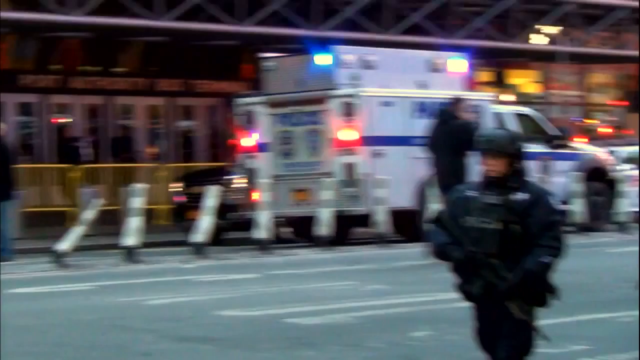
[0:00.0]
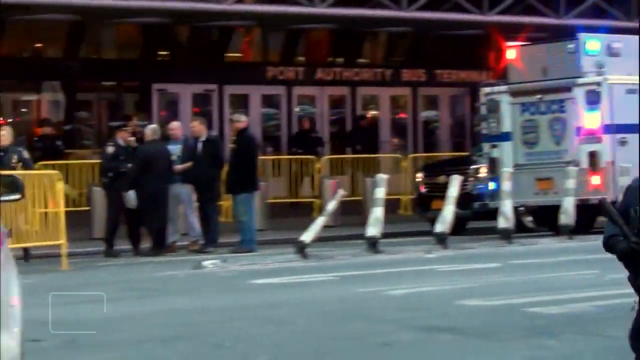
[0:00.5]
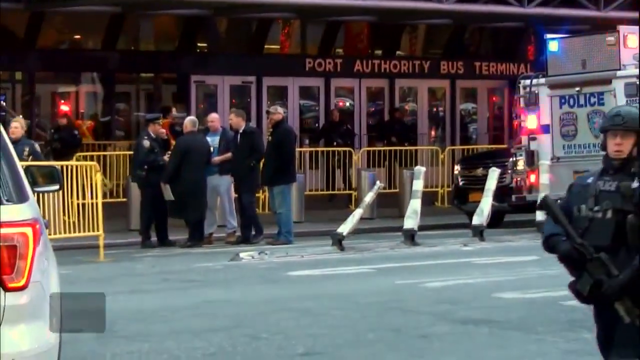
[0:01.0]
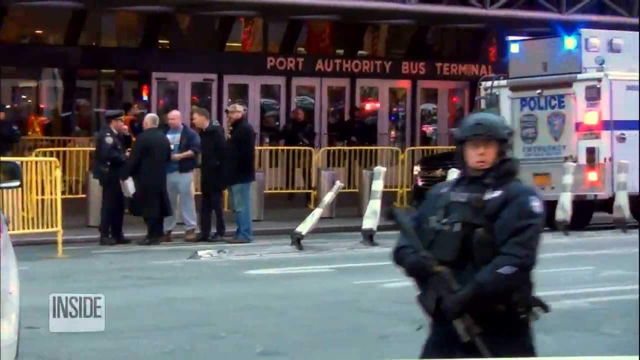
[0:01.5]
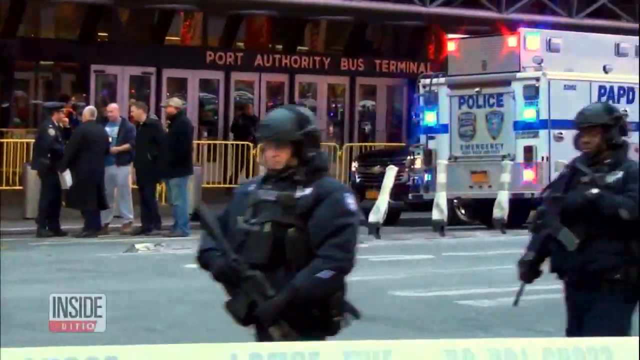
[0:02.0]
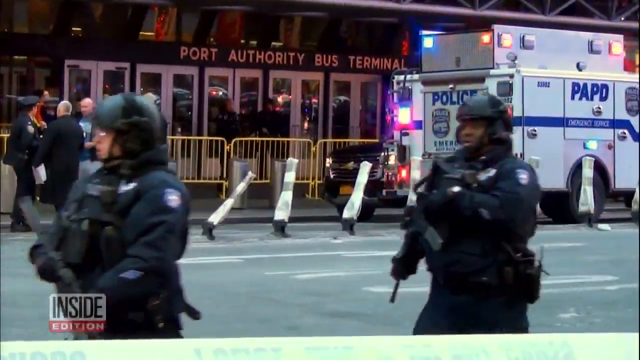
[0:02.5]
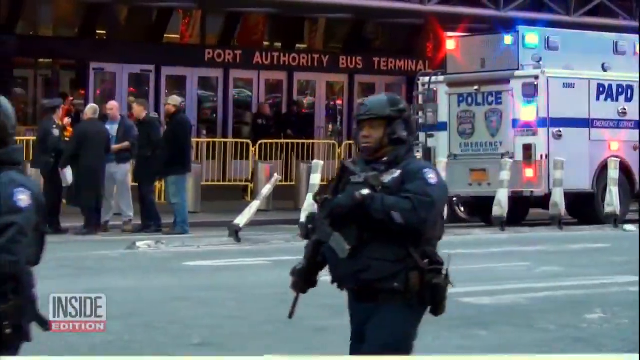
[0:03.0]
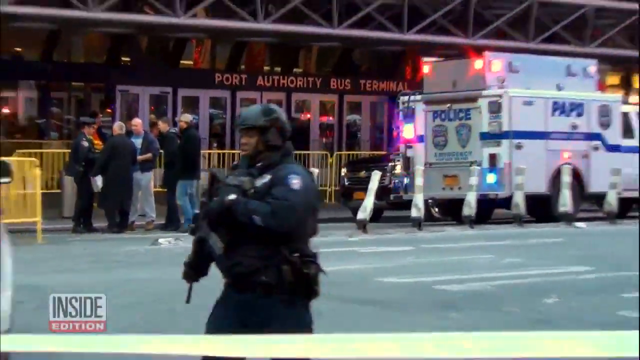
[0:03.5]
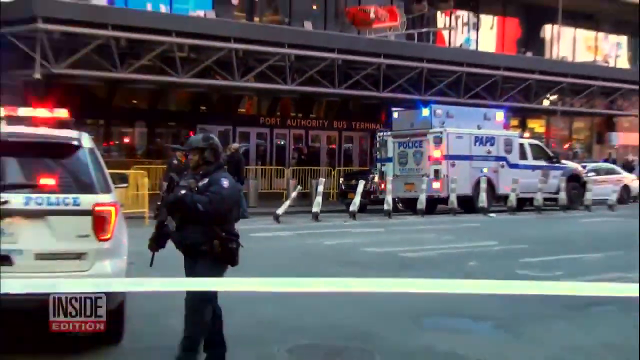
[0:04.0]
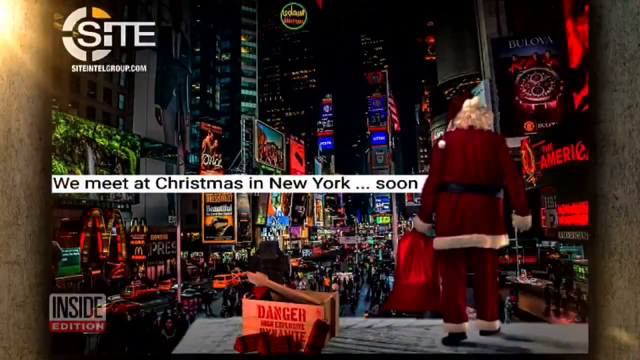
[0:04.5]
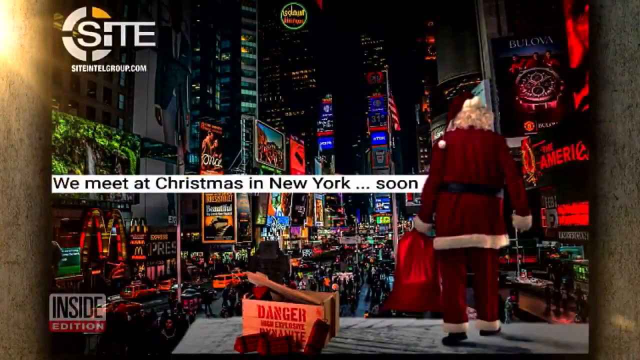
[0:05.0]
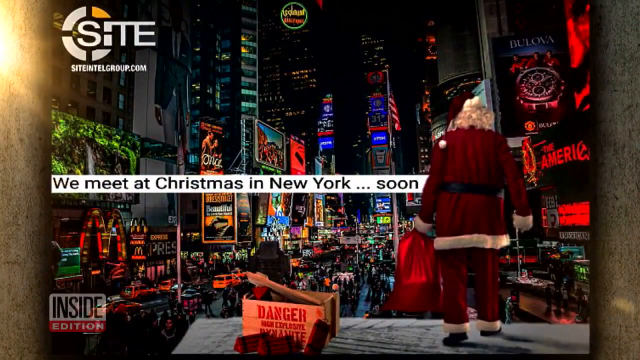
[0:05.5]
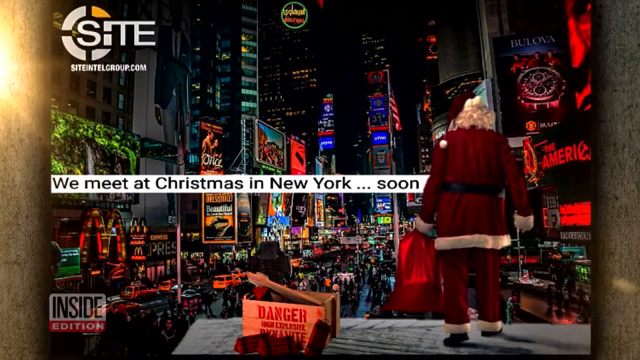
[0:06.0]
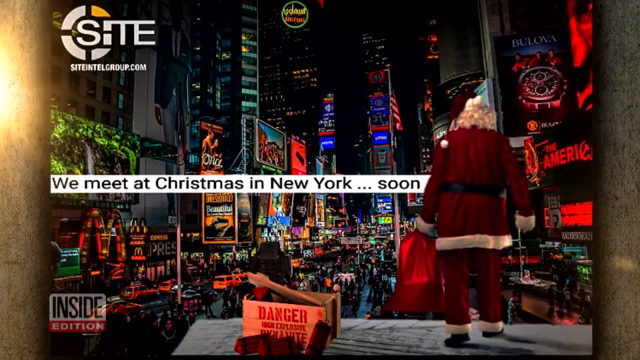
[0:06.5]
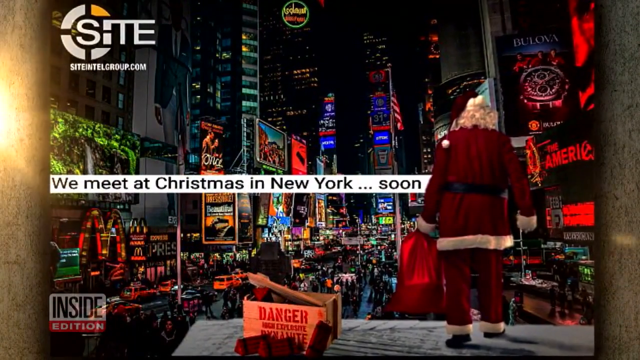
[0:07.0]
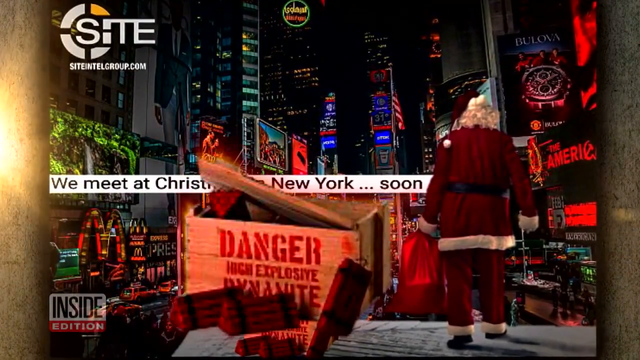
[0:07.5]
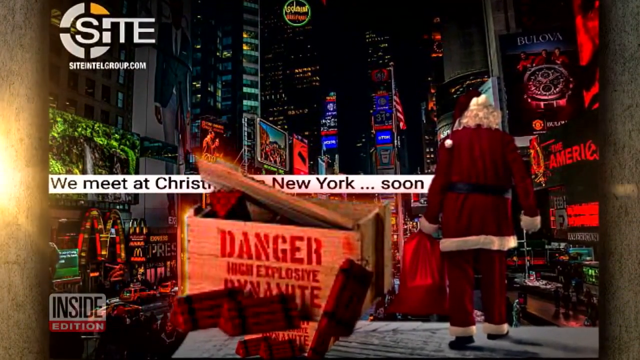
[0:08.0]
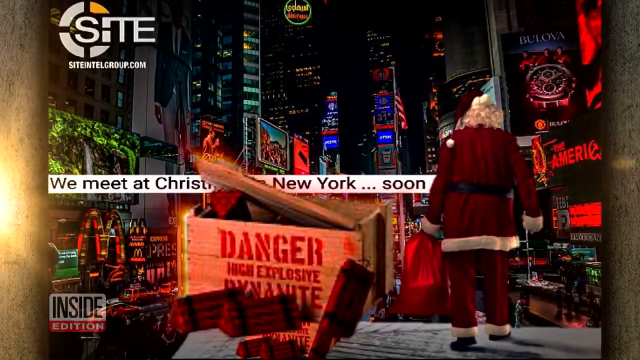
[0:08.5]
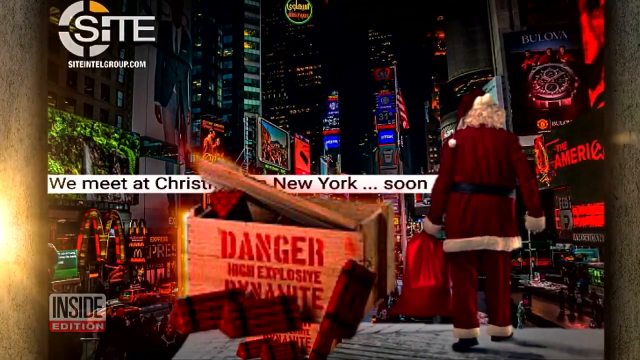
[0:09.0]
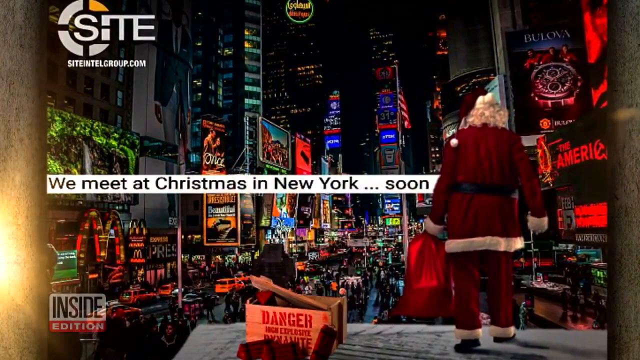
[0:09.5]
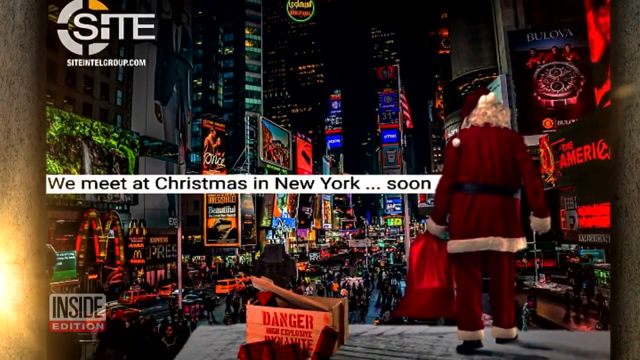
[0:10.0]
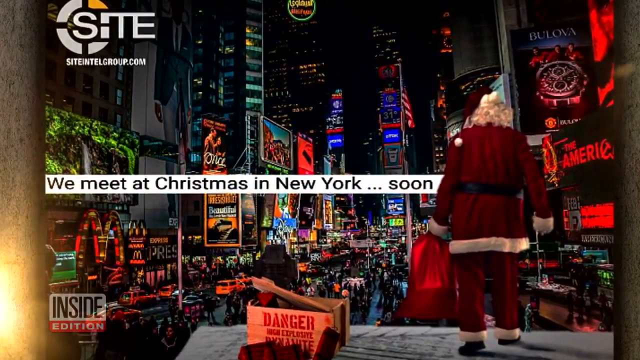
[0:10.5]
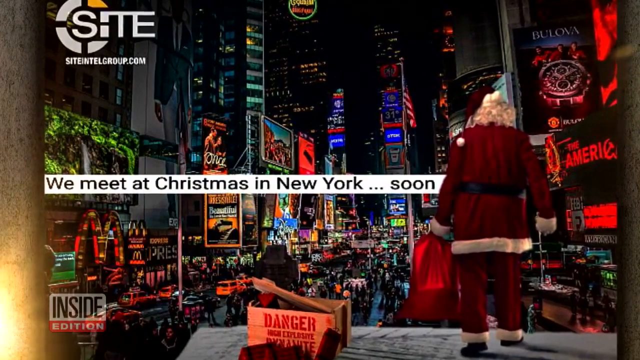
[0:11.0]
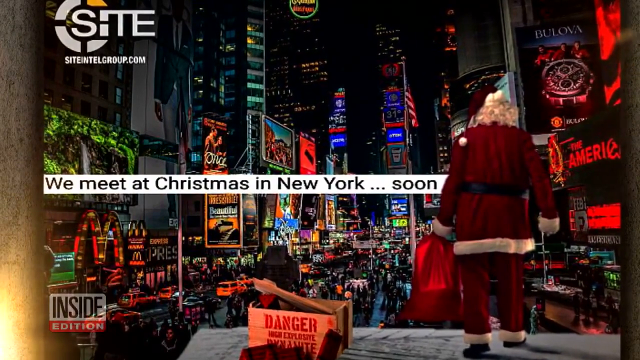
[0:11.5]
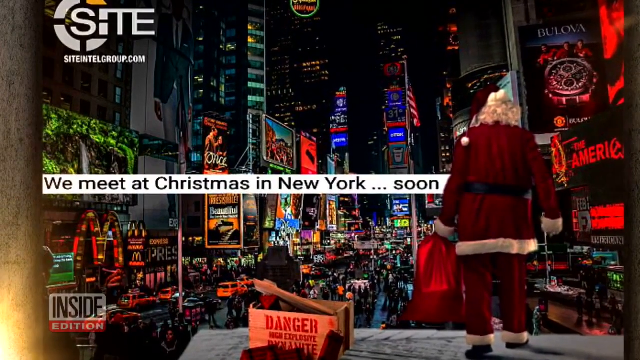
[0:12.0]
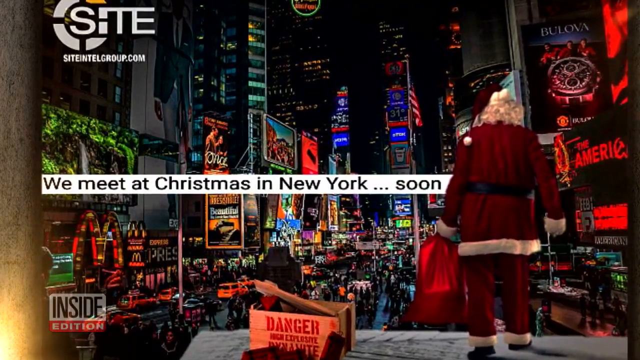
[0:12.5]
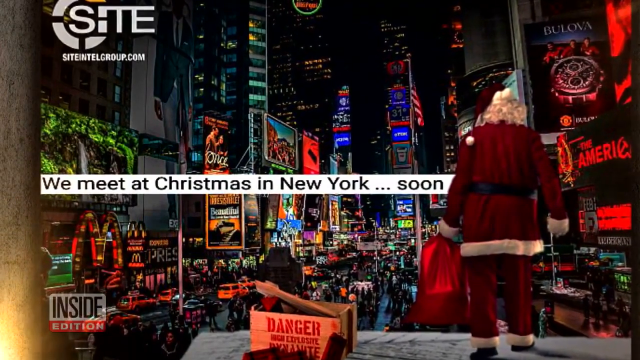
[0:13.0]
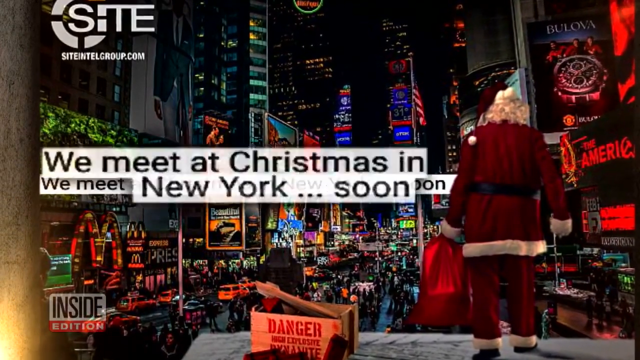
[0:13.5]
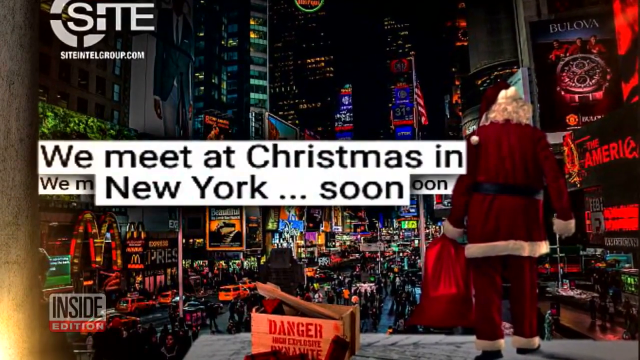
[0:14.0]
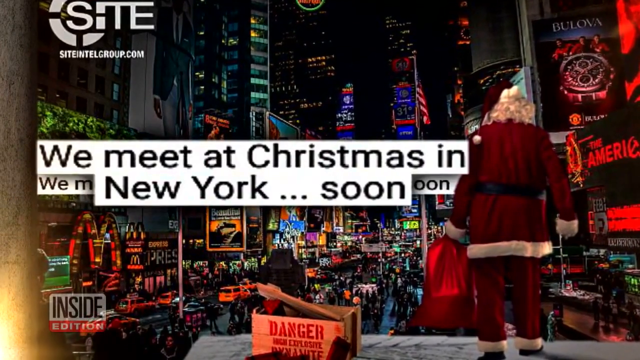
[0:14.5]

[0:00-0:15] The video appears to be a clip or perhaps an intro for a show called Inside Edition. A city street in New York is shown with what look like two police officers dressed in tactical or riot gear, perhaps some sort of SWAT officers. In the background is what appears to be a large white police SWAT vehicle, and another police vehicle nearby has its lights flashing. People stand observing from behind a yellow barricade. Across the screen, black letters on a white background read "we meet at Christmas in New York... soon." Below that is an animated graphic of a sort of cardboard box with red letters reading "danger, explosive device." There is also a non-animated graphic, a picture of Santa Claus from behind, holding a red bag in his left hand with his back to the viewer.